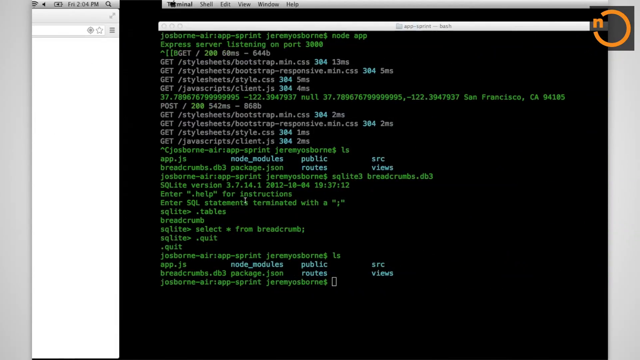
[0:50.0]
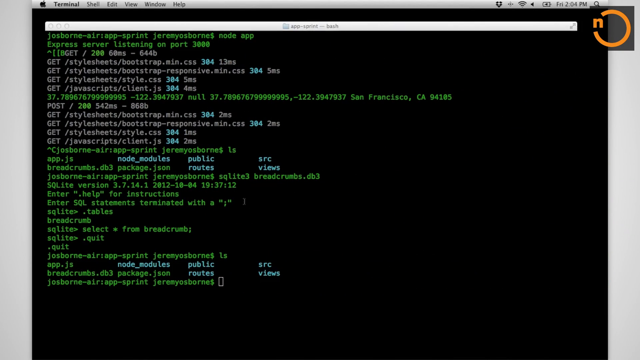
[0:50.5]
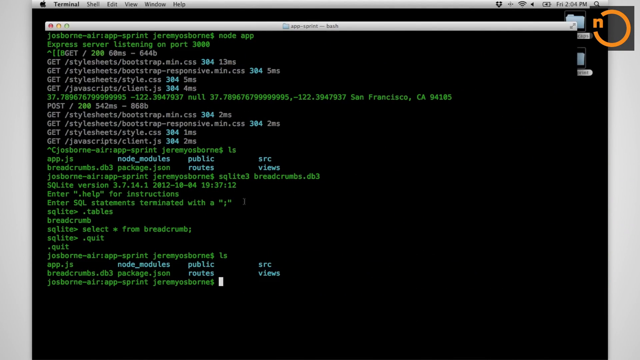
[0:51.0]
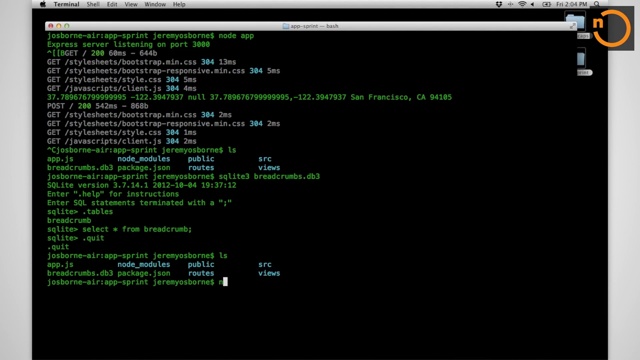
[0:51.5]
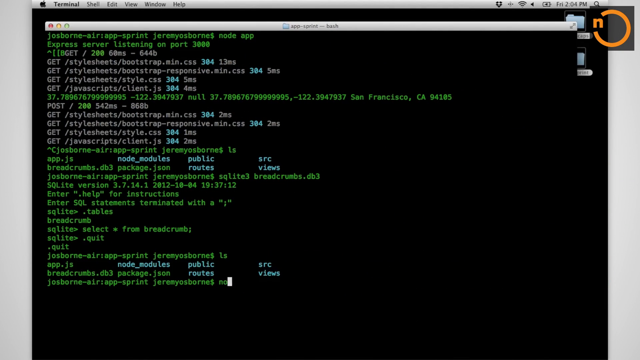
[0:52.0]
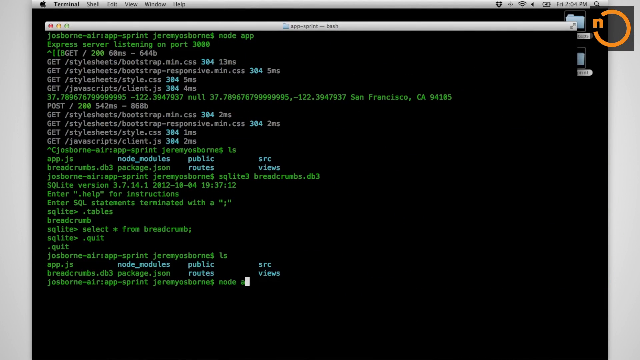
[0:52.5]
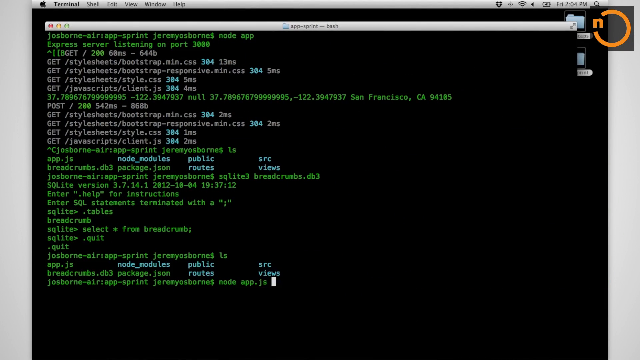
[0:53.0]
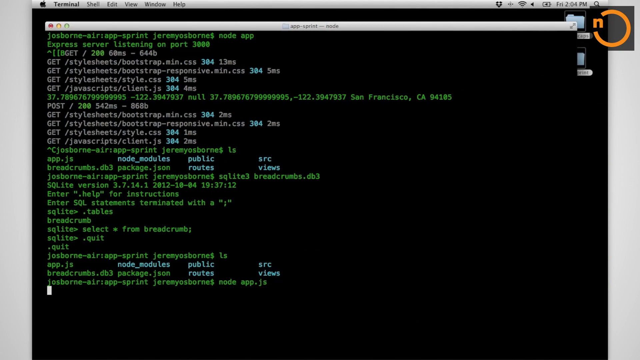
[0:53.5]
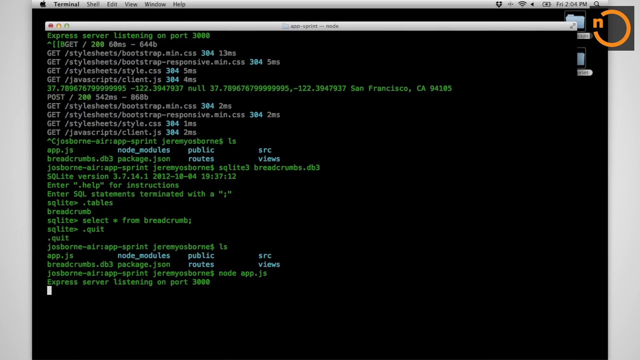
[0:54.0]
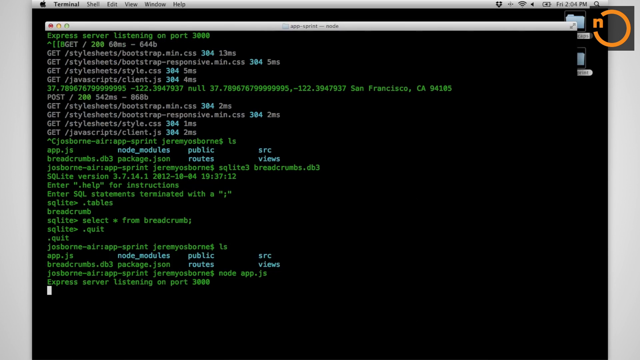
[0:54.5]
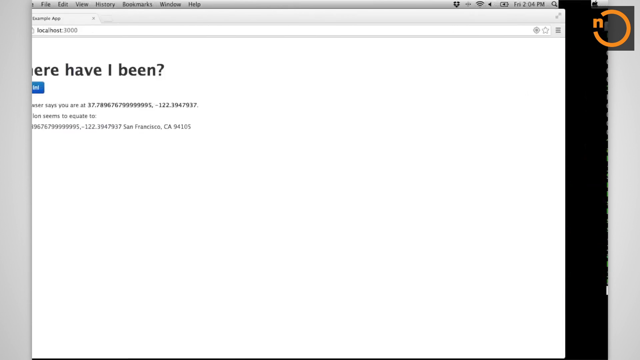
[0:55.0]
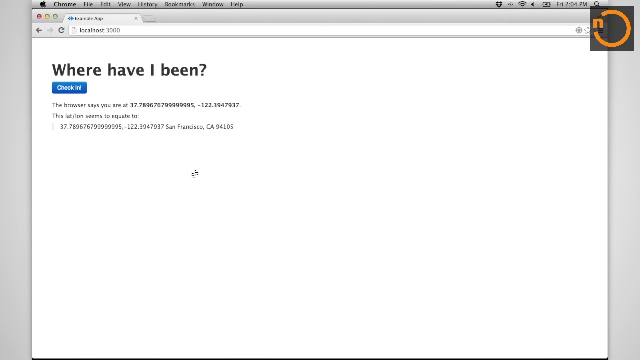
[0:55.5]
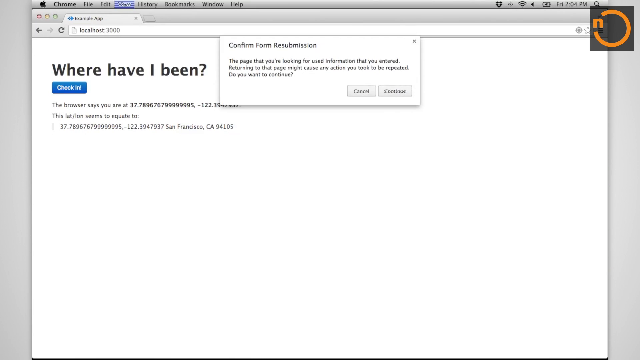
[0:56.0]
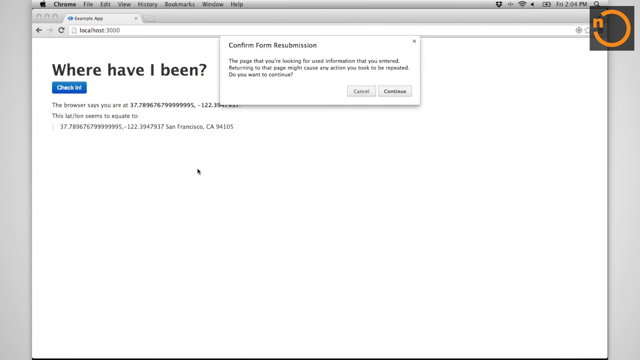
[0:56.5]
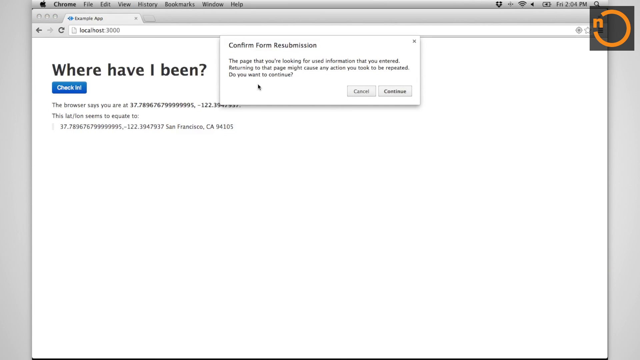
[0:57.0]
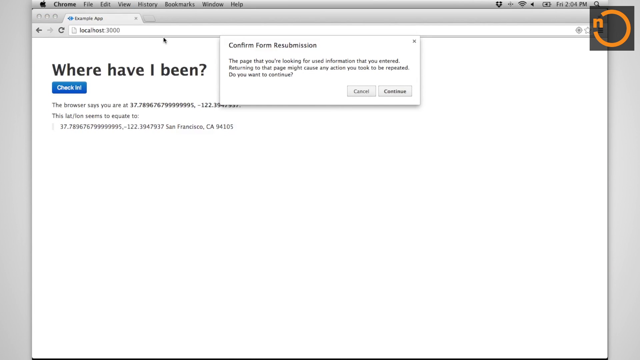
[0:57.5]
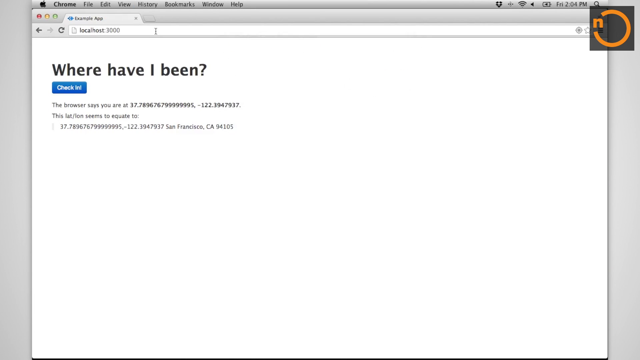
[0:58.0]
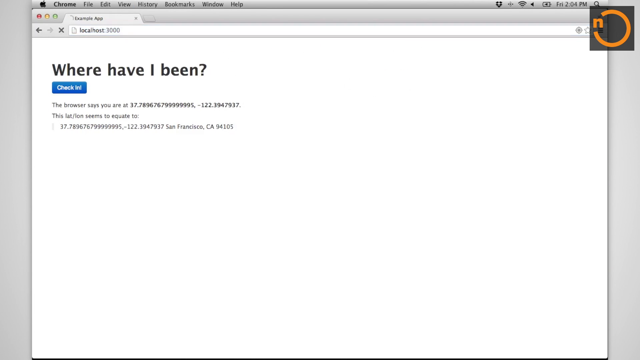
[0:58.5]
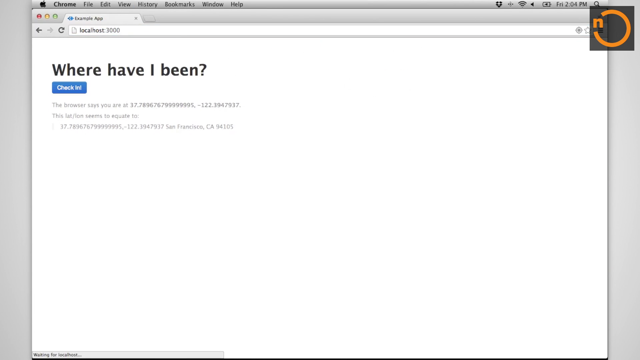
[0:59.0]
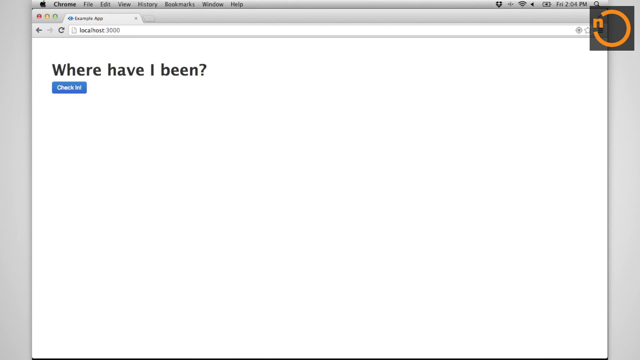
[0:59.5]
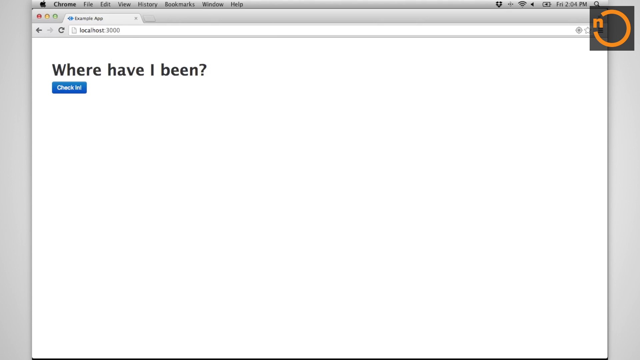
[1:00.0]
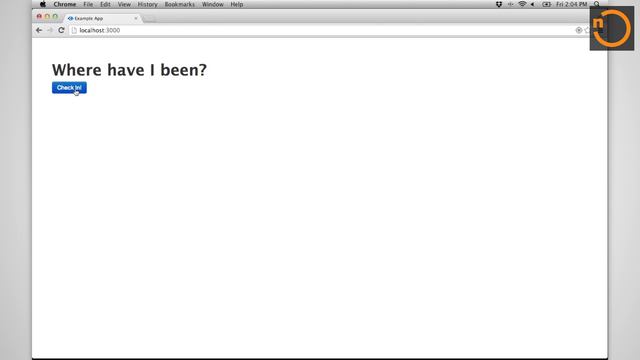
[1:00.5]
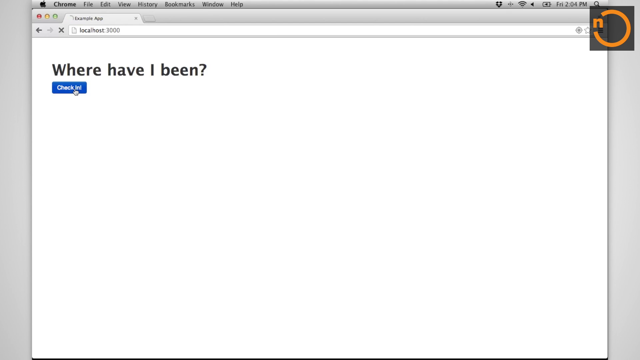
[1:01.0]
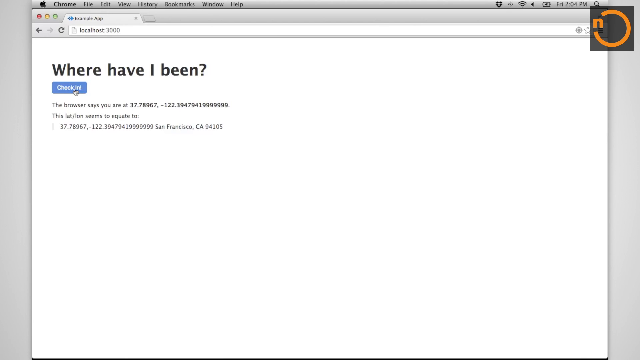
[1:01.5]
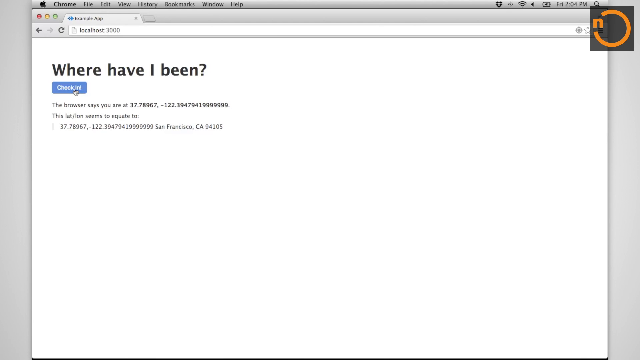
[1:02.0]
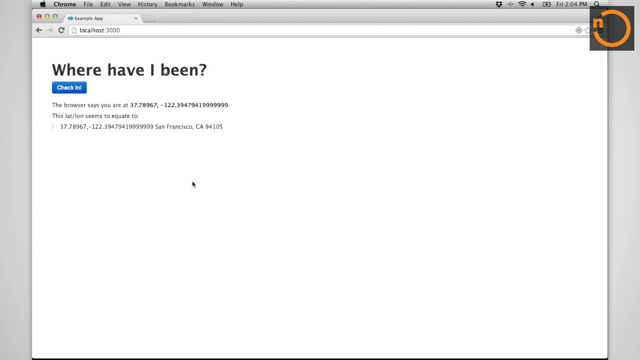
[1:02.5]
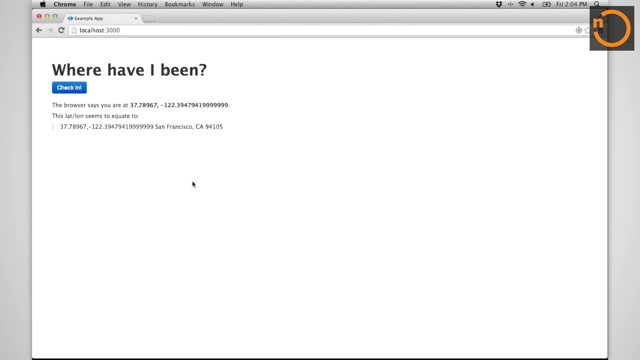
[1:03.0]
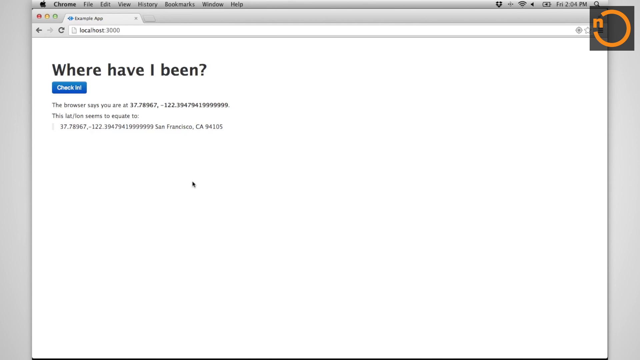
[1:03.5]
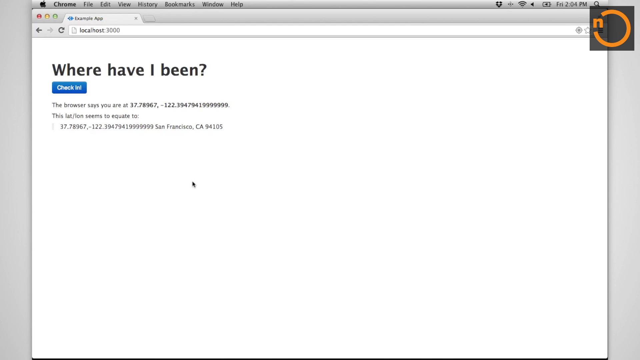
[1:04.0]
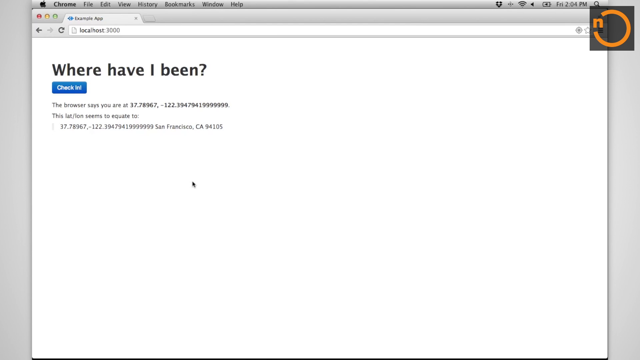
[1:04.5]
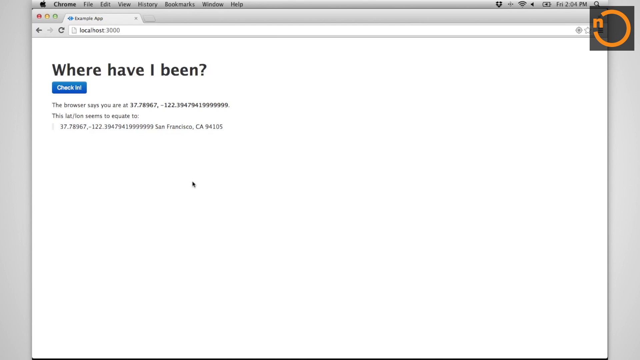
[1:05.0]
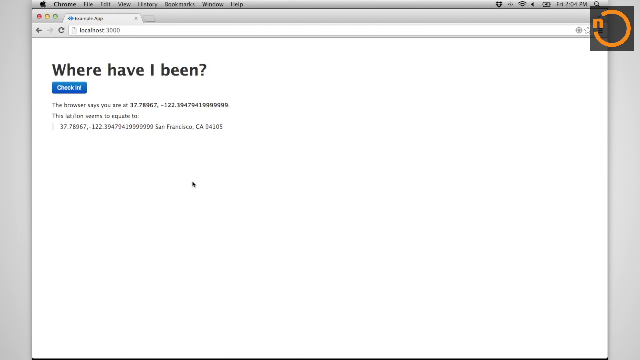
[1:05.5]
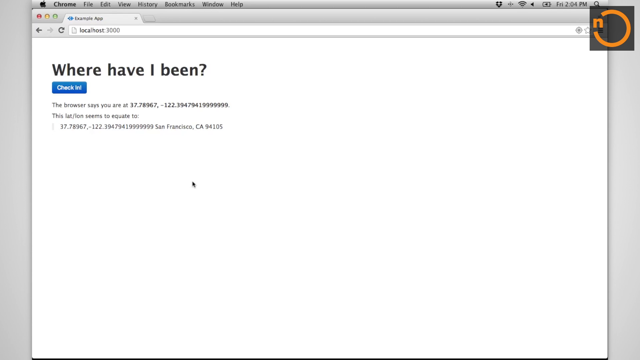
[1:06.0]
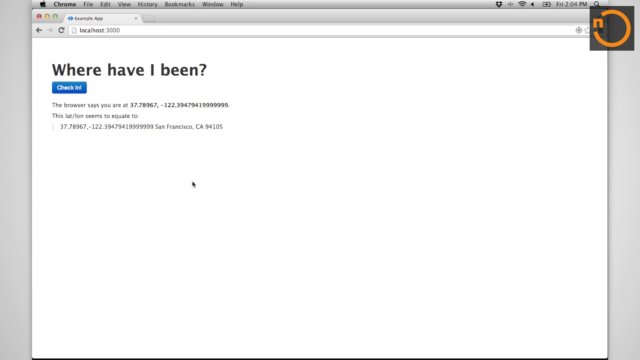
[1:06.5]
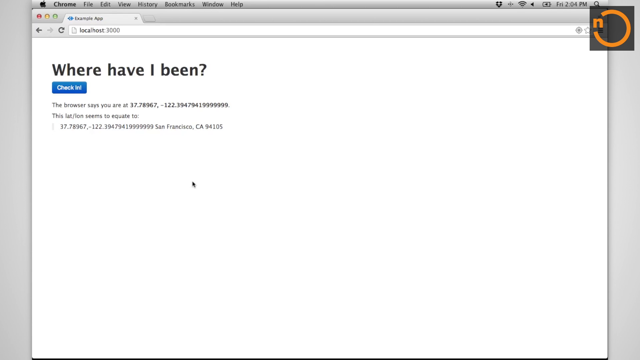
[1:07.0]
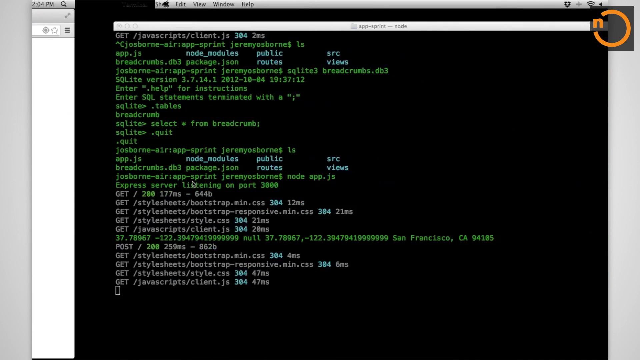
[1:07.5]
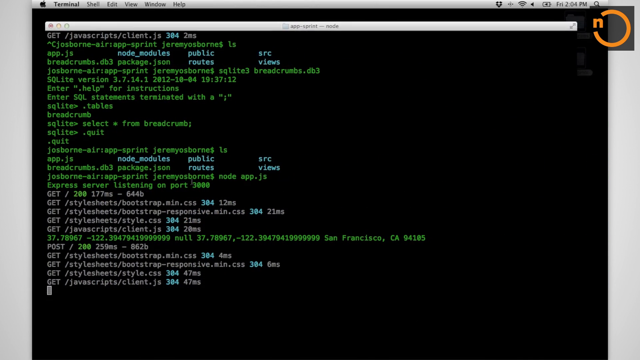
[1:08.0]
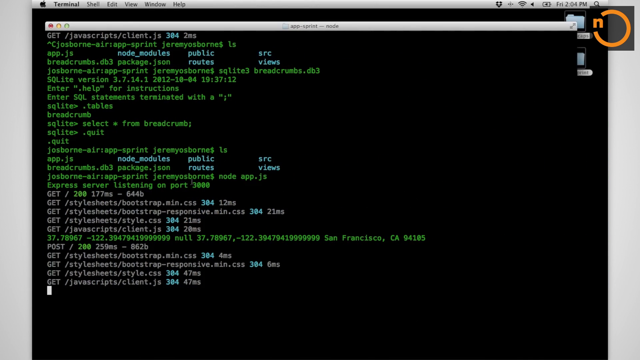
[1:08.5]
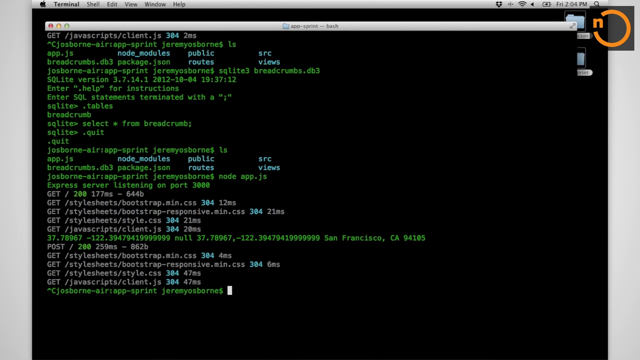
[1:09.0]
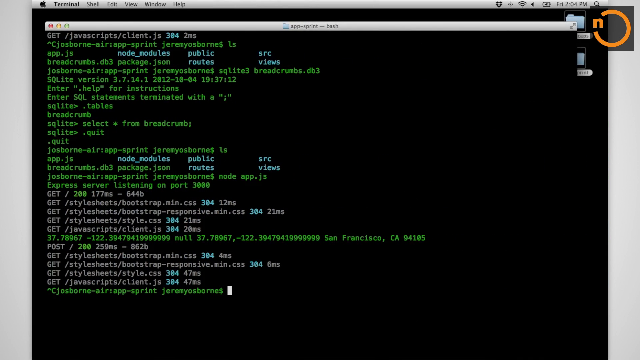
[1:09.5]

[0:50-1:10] The screen changes to an open note block used to record information, containing information about an IP and some other details. The screen then goes back to the coding, now showing a new and different stage from the earlier code: a bigger screen with more information, including "Informations.get". Green lines are being typed while the developer also uses the note block, where he records information to check his coding.